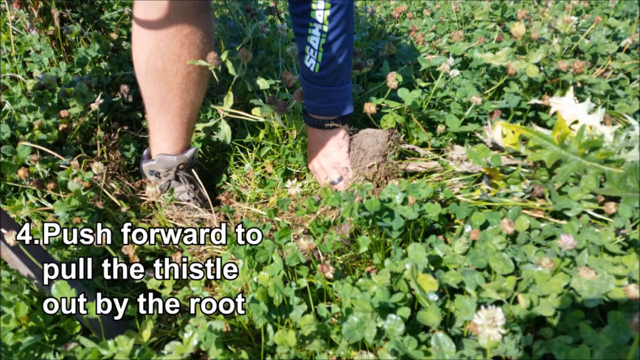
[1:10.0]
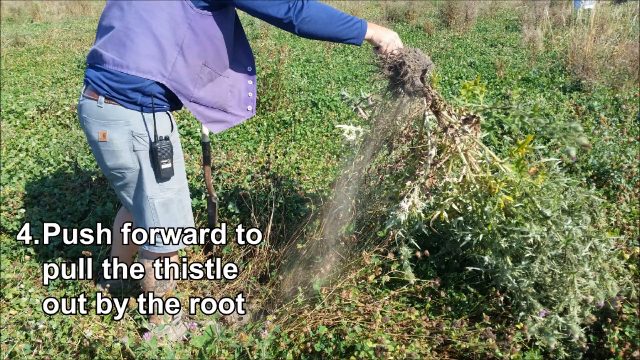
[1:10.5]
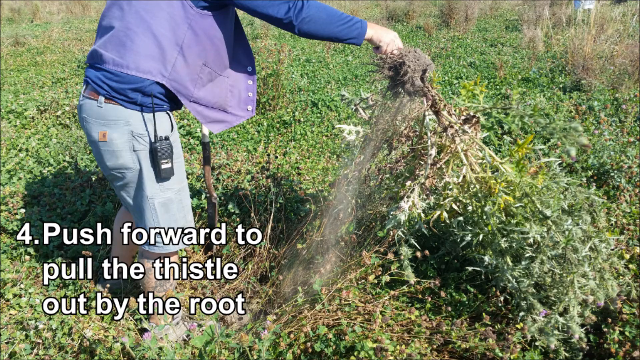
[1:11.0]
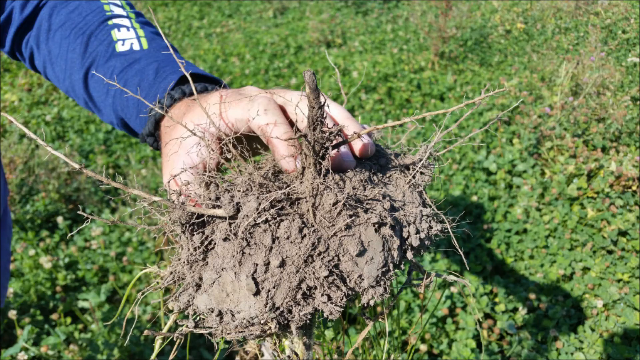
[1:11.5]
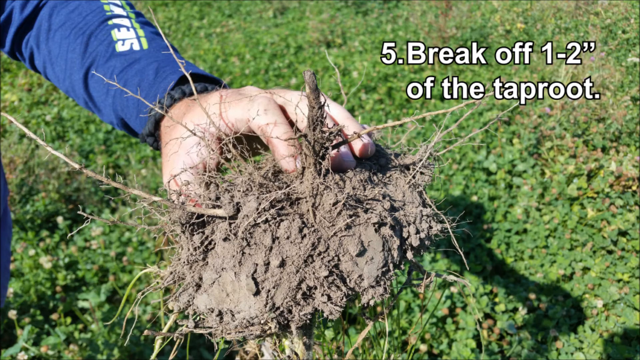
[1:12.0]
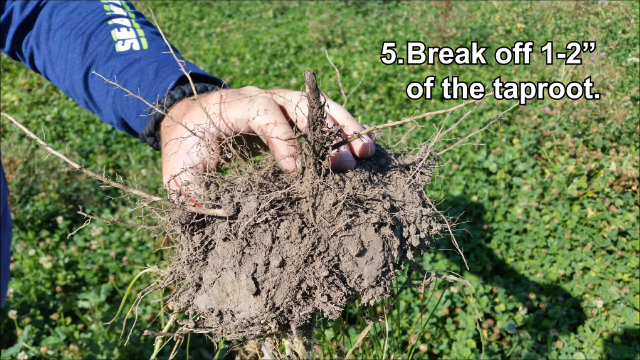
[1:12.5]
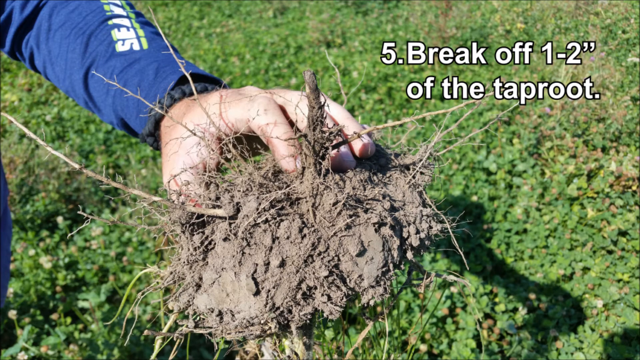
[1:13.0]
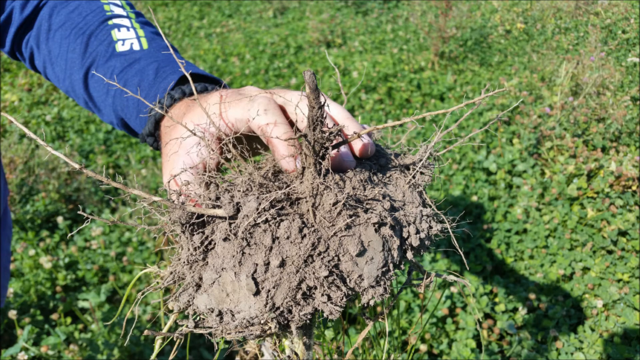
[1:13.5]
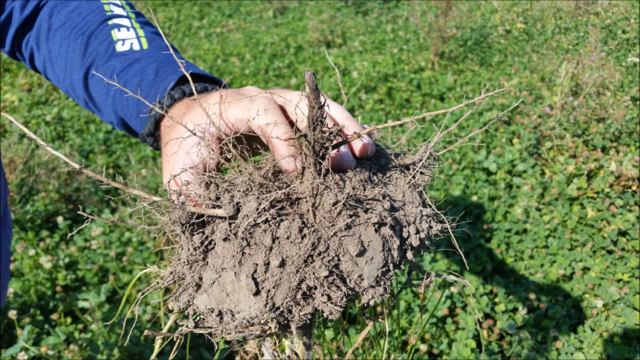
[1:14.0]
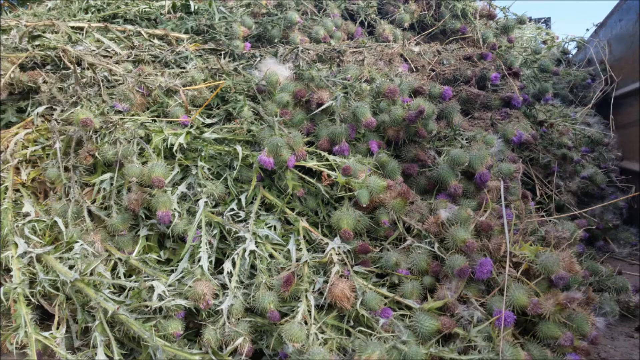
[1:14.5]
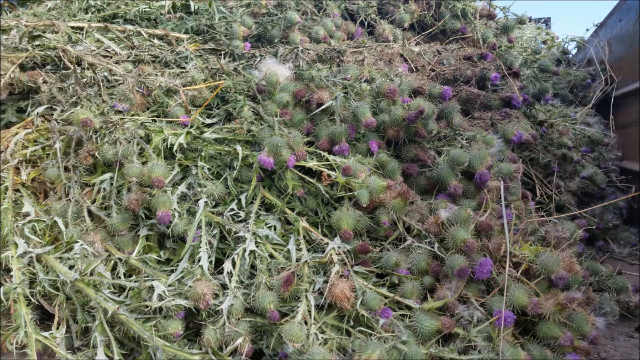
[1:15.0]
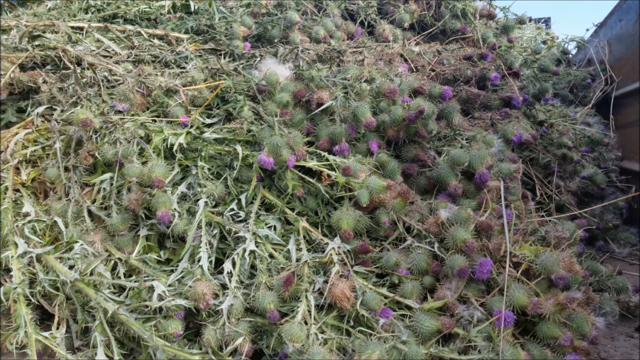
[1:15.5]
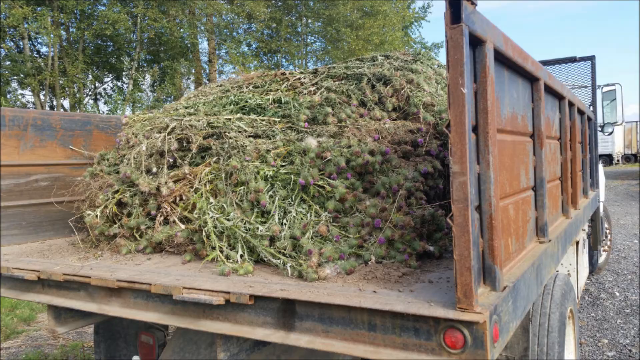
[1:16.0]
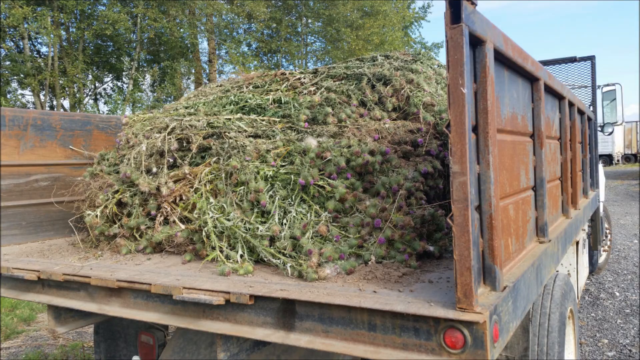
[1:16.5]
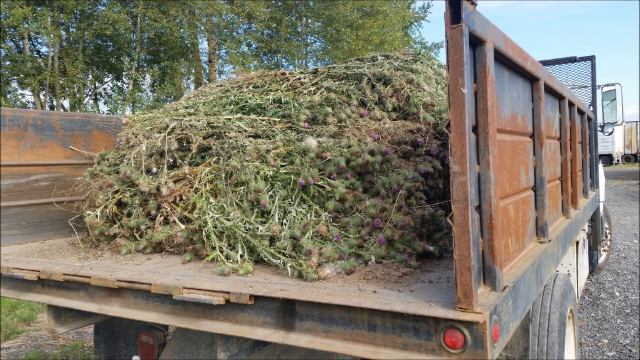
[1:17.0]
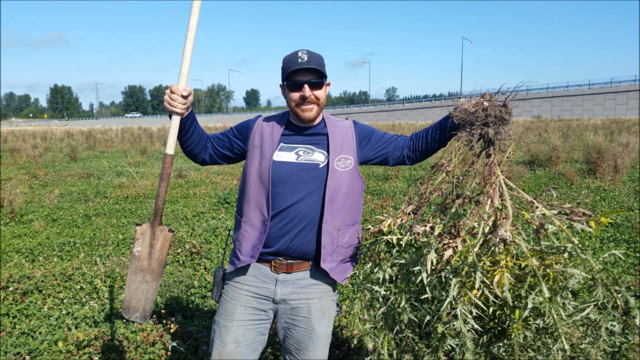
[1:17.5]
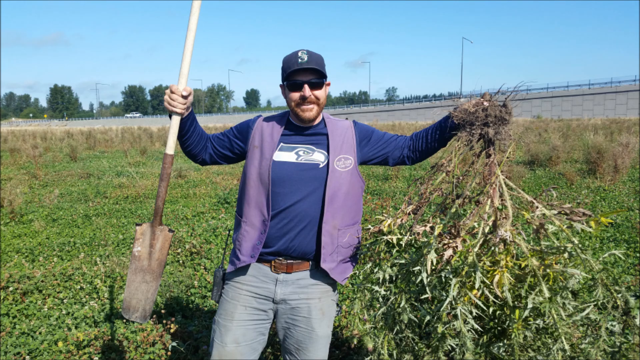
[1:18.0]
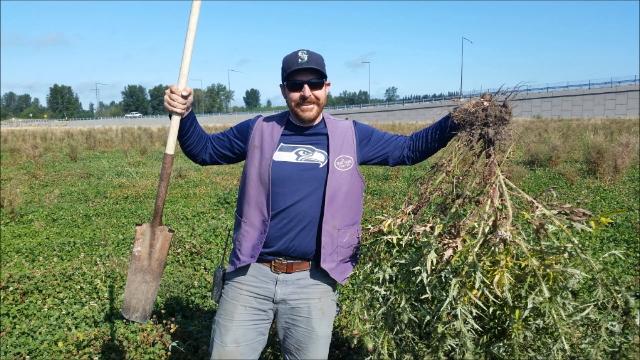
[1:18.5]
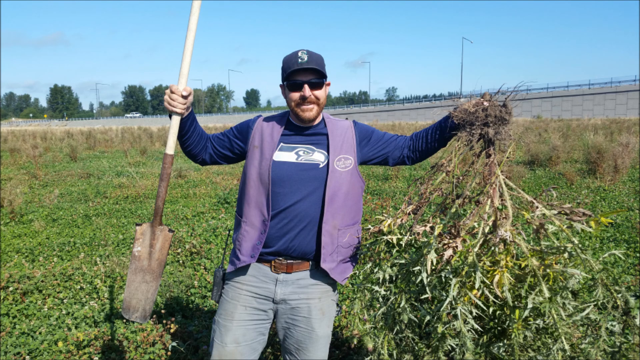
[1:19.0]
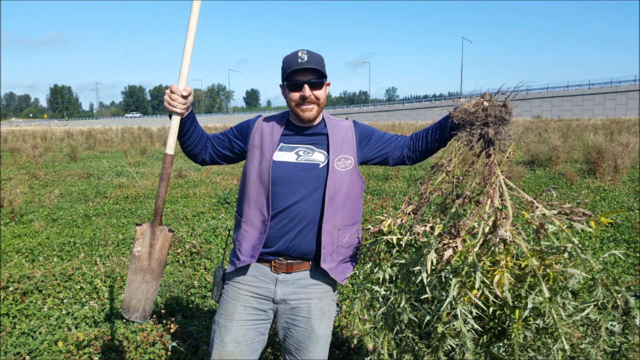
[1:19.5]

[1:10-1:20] The fourth step is to push forward to pull the tissue out by the root, pulling the plant out by its root. The fifth step is to break off 1 to 2 inches of the top root, separating the root from the plant, and the job is done.